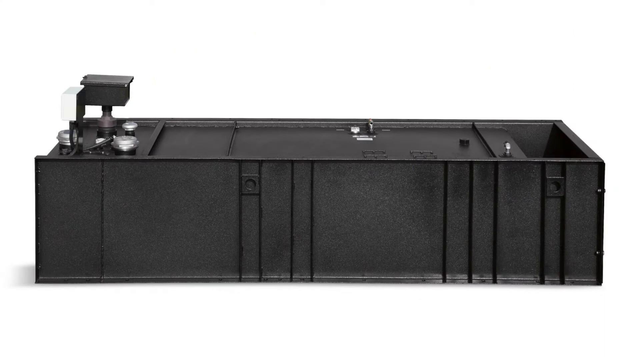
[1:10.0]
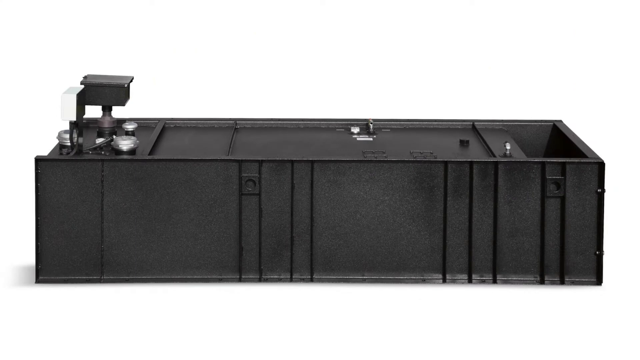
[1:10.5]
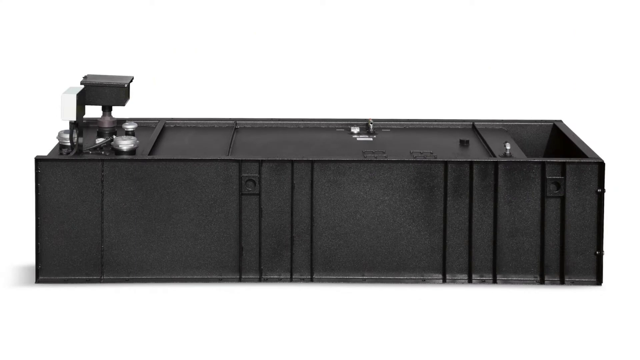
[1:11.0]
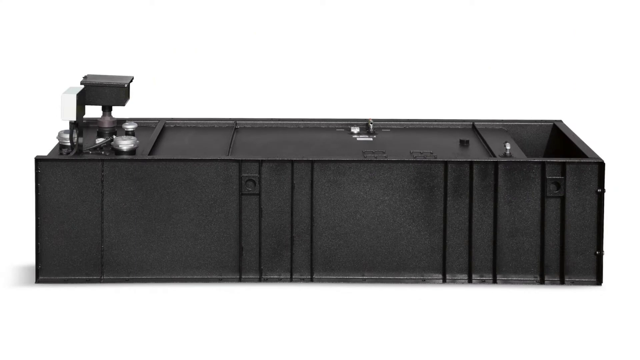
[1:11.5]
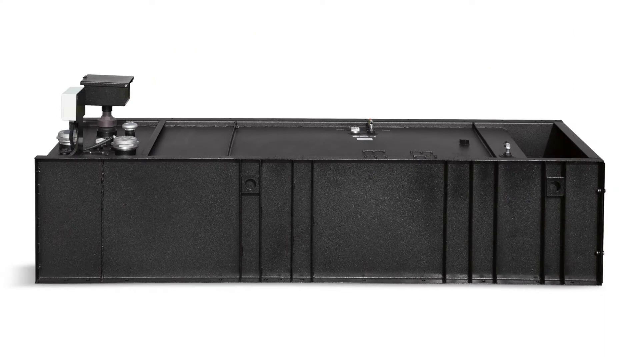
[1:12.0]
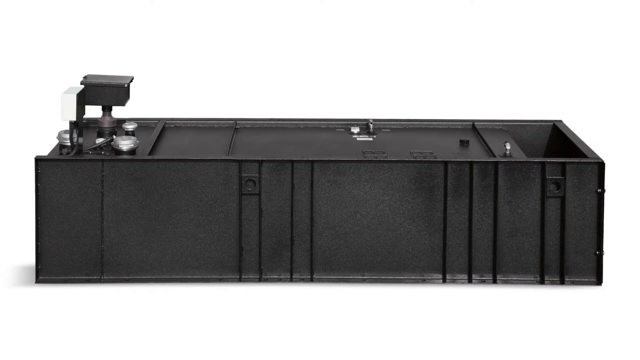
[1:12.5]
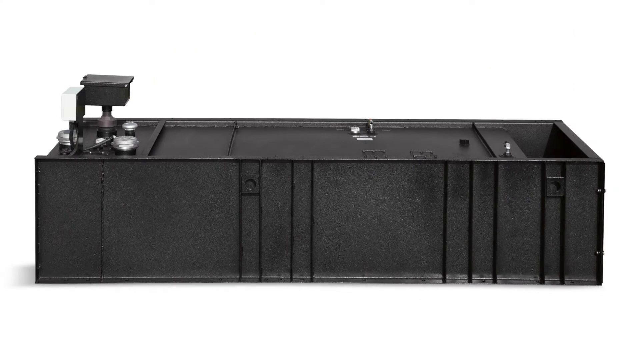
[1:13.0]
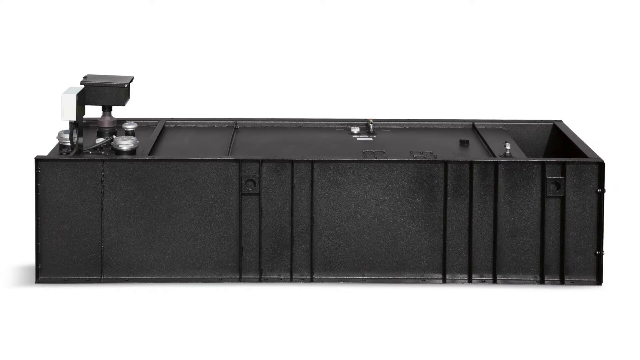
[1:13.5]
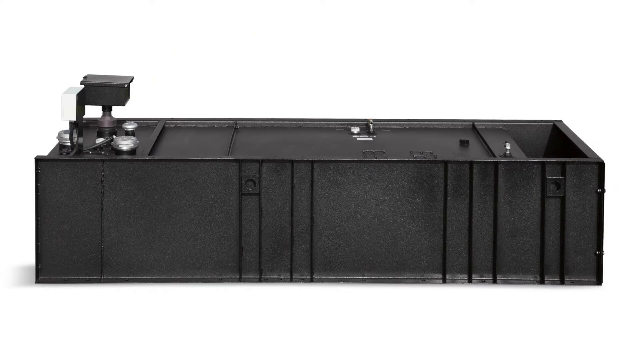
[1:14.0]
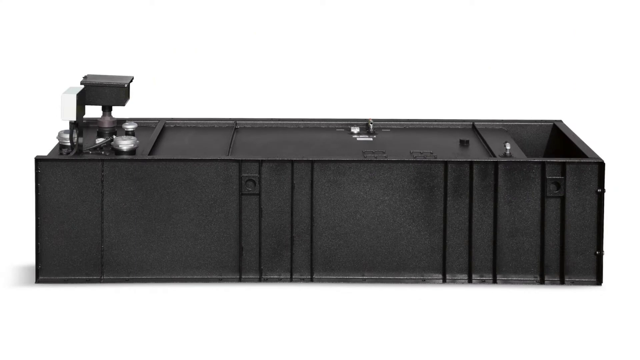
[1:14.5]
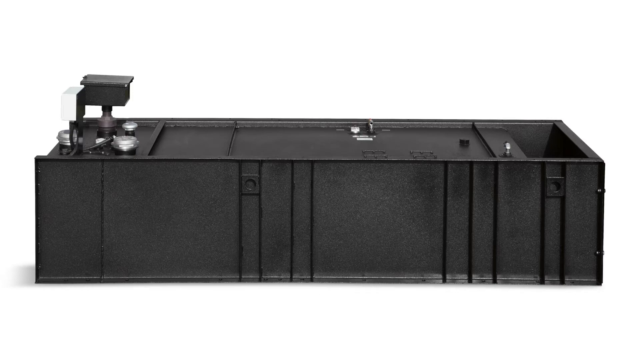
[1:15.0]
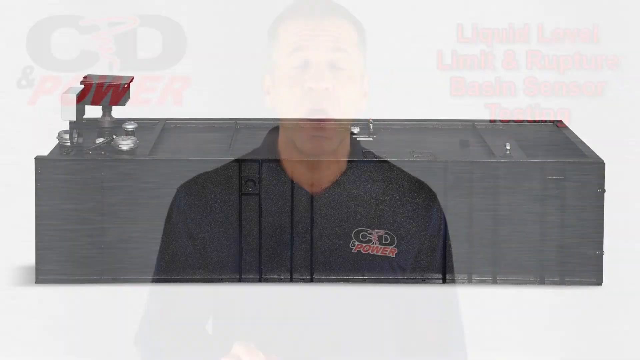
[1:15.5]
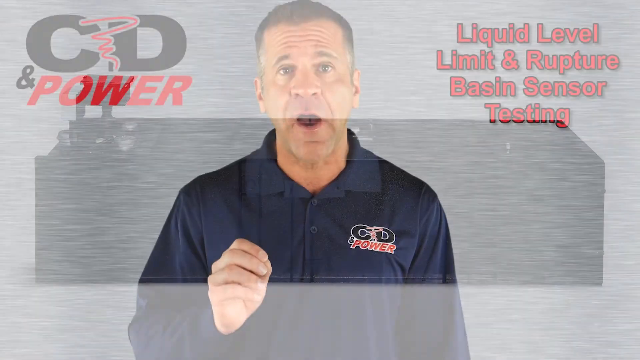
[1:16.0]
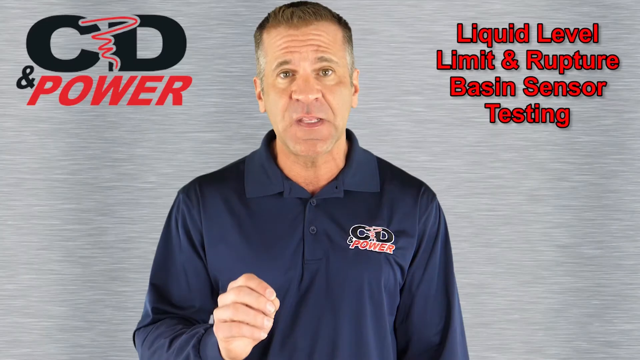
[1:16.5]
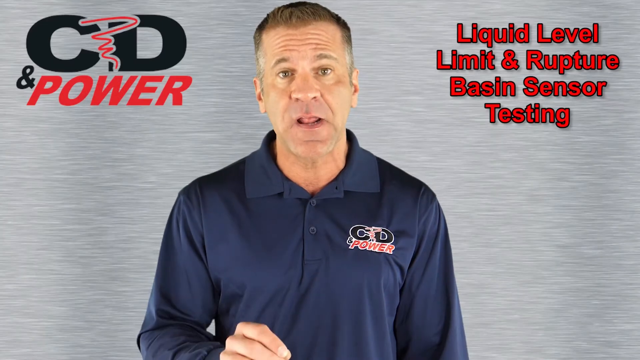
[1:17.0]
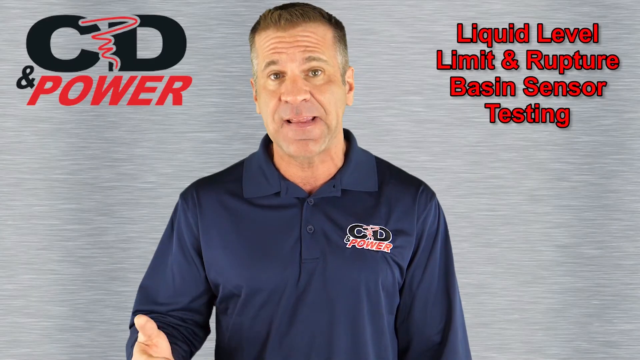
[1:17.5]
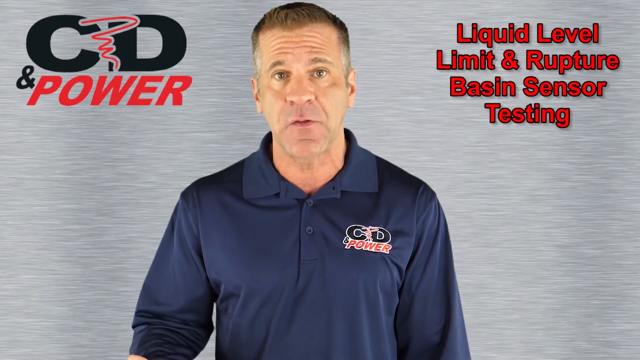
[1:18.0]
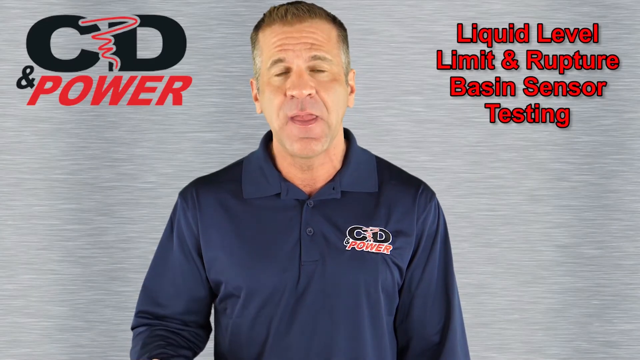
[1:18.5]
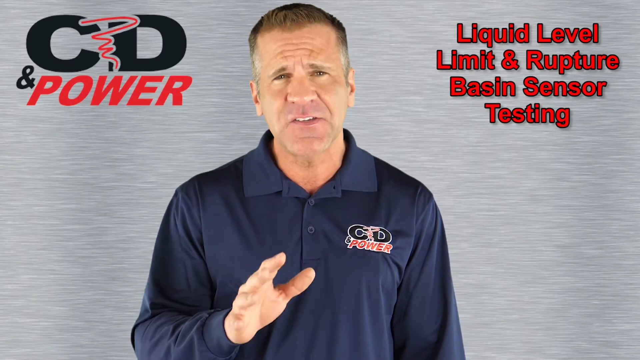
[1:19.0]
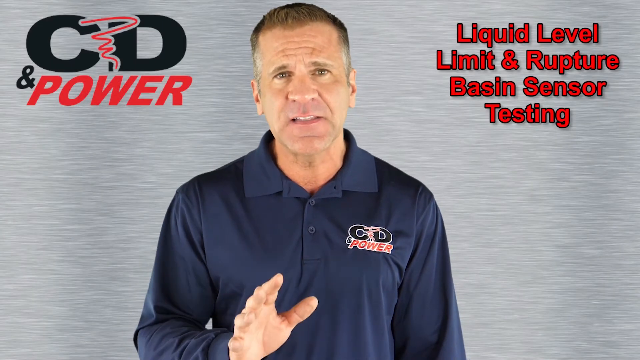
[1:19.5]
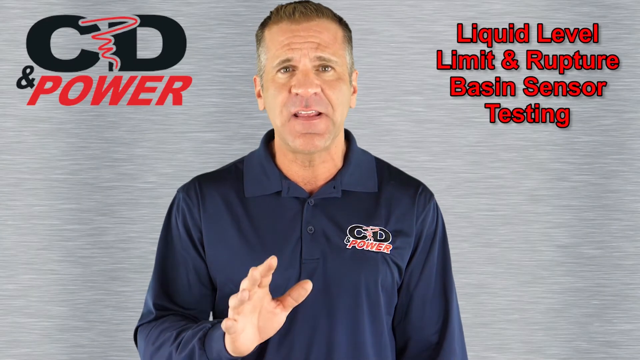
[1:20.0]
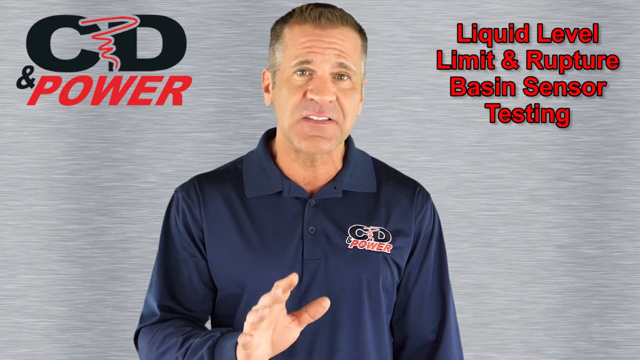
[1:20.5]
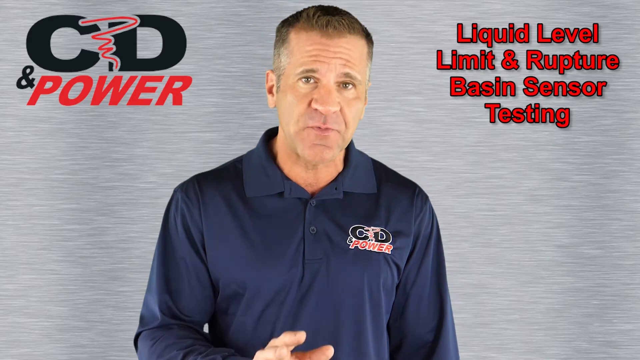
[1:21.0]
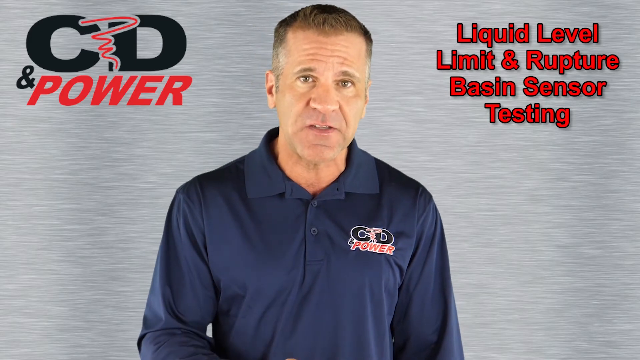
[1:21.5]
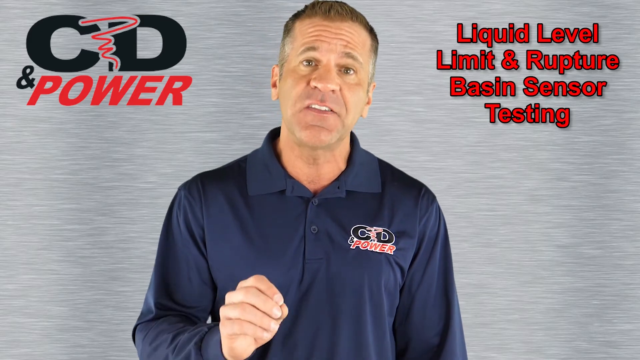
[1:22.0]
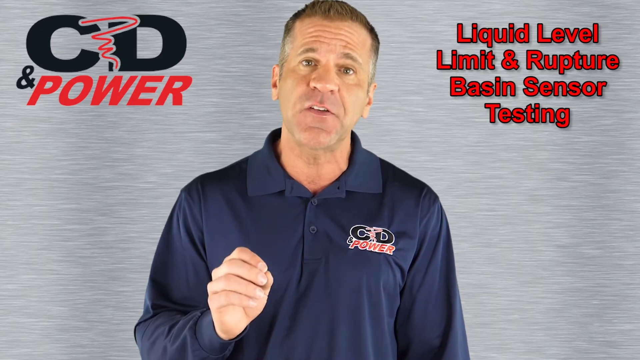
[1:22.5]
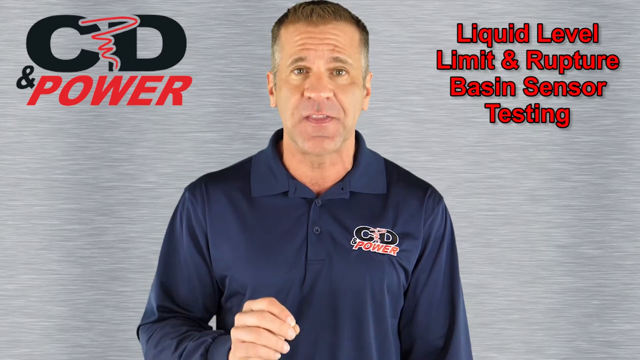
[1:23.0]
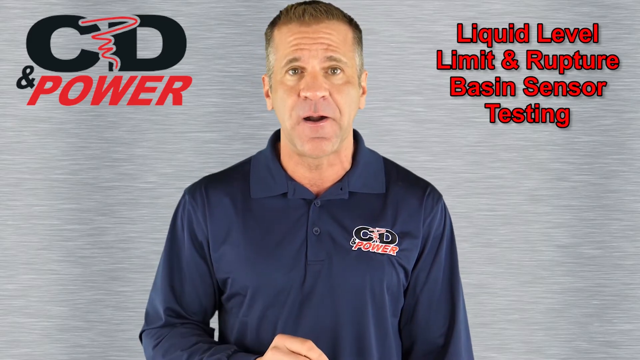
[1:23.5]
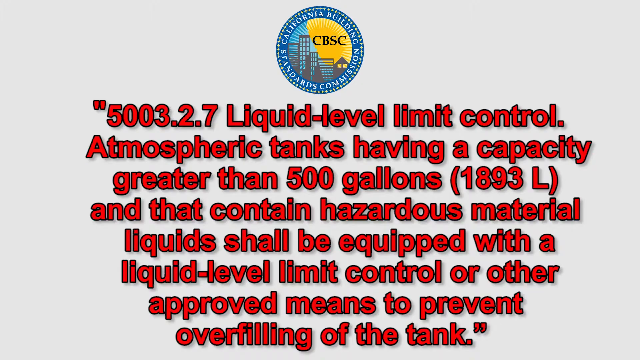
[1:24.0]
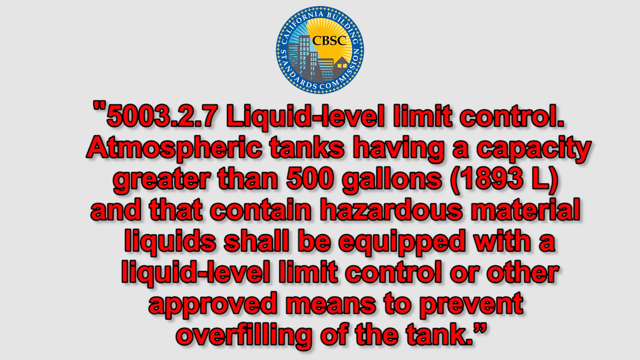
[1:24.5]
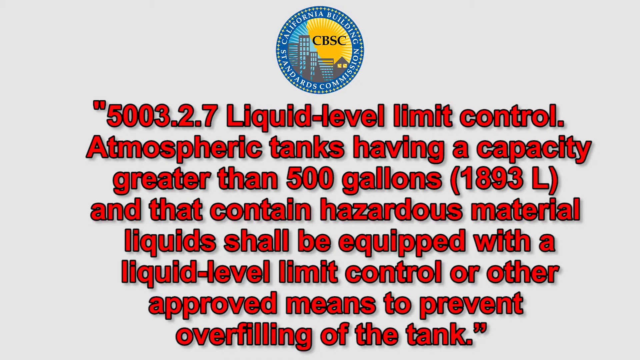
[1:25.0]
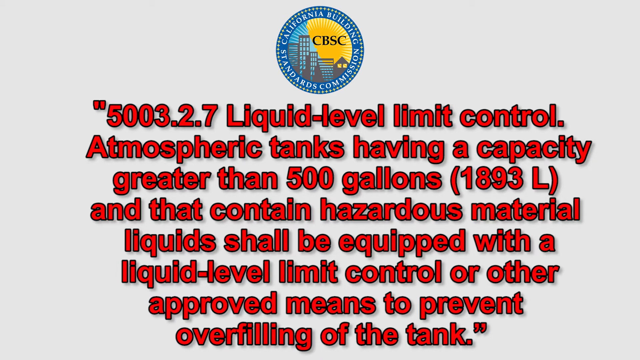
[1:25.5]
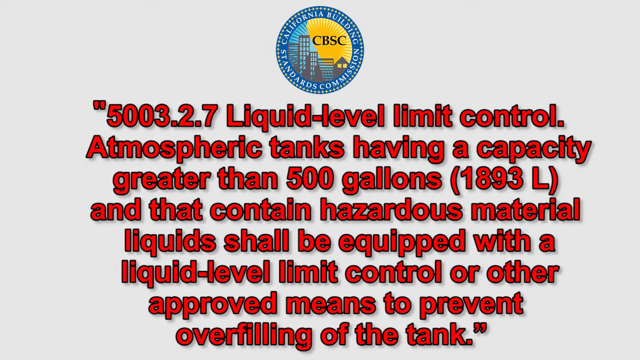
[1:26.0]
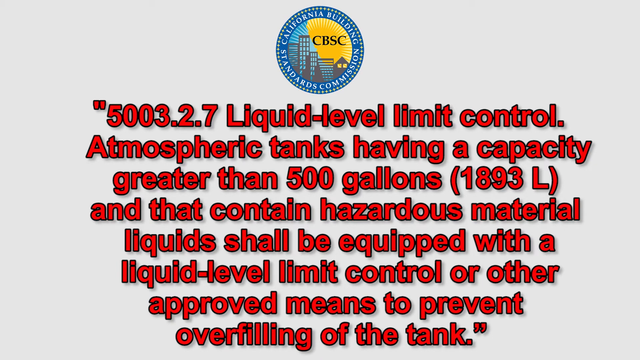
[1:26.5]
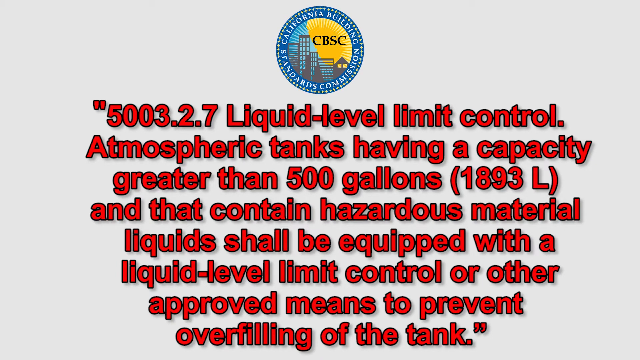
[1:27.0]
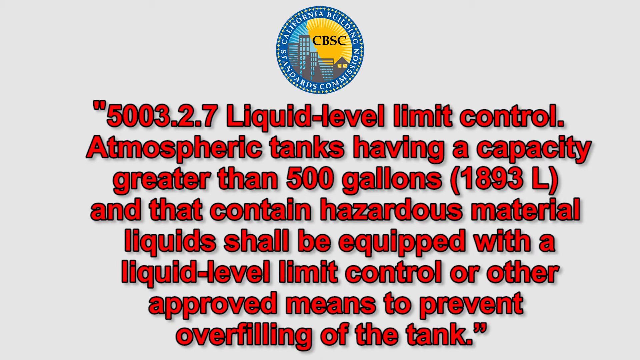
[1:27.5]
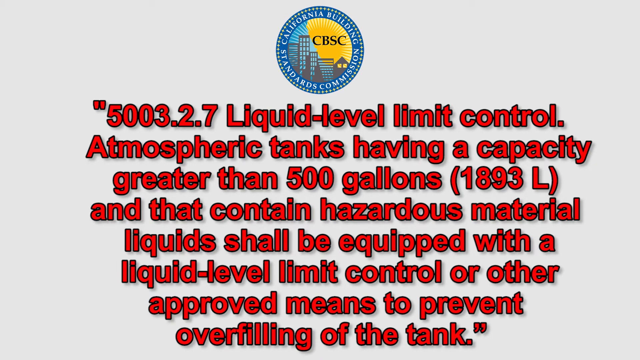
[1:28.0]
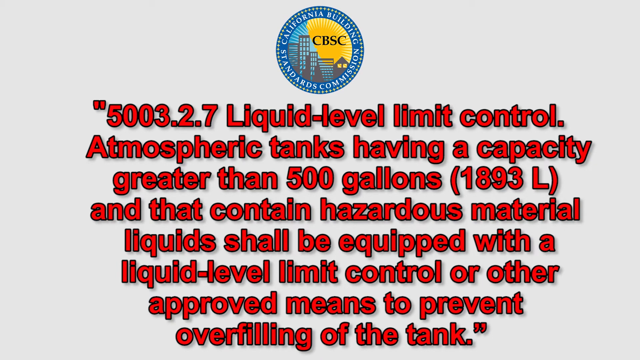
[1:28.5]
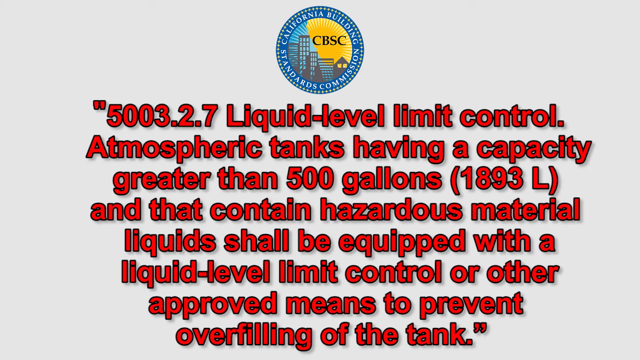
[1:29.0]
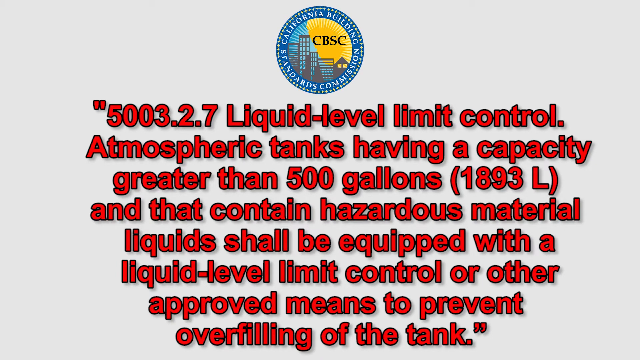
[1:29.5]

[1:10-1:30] The image of the long black box is shown, then the video transitions back to the man, who has a big nose and an almost tannish skin tone rather than pale white. Next comes a wall of text below a logo for the California Building Commission Standards. In the middle of the logo it says "CBSC", with a yellow sun at the top right and a cityscape at the bottom left. The text below has about 7 lines; the first line says "5003.2.7 Liquid Level Limit Control", and a couple more lines below it concern this limit control.